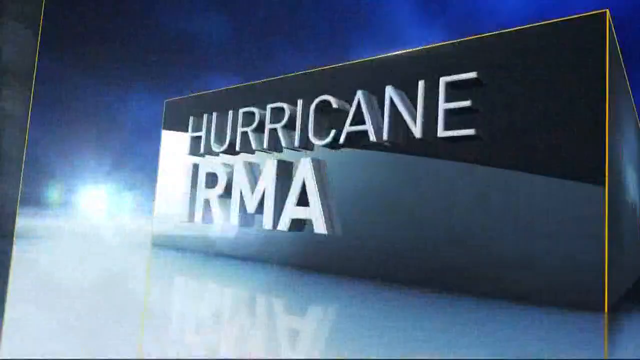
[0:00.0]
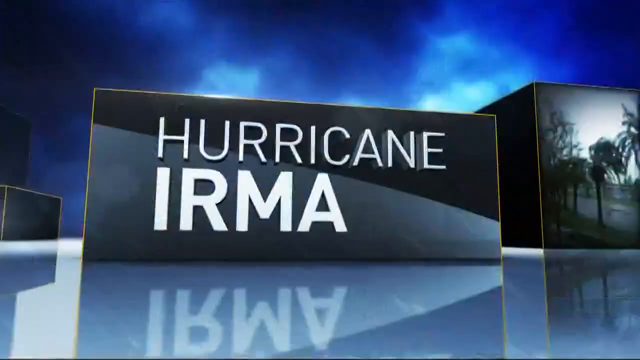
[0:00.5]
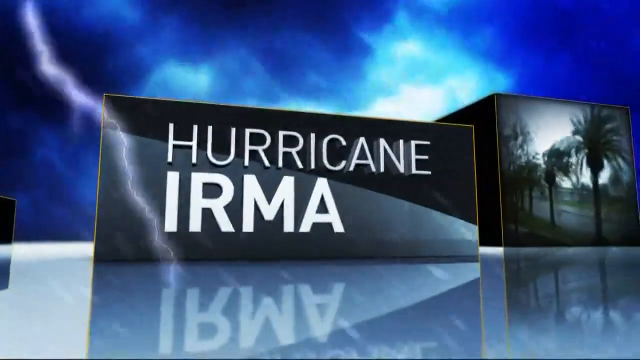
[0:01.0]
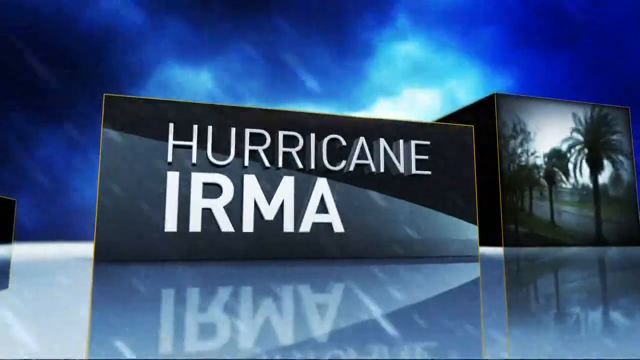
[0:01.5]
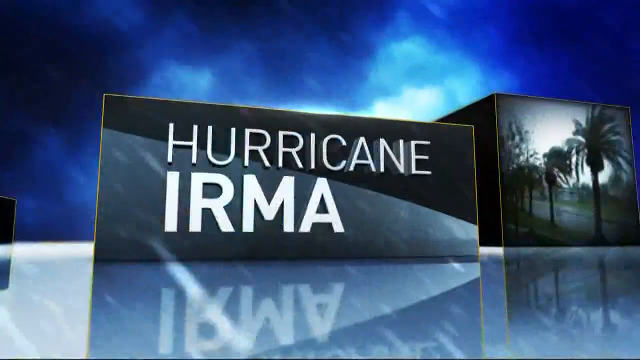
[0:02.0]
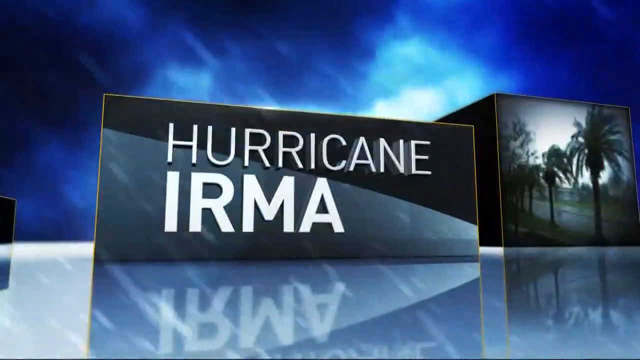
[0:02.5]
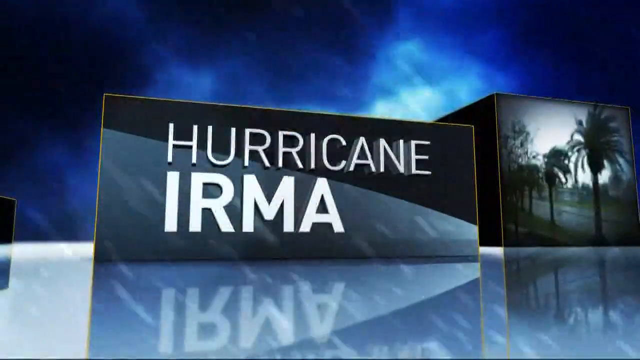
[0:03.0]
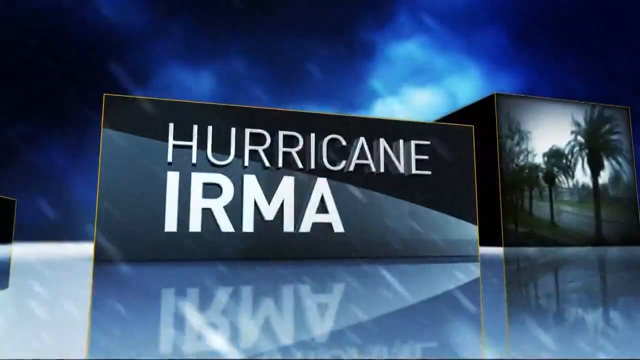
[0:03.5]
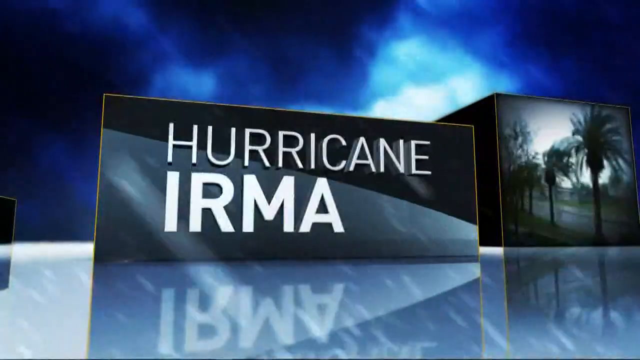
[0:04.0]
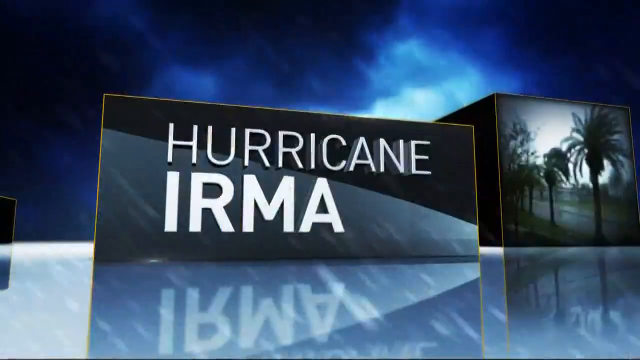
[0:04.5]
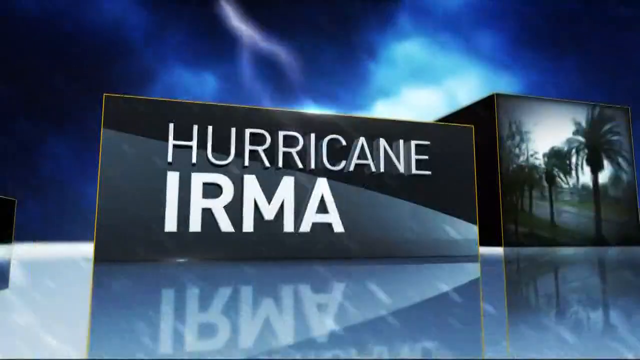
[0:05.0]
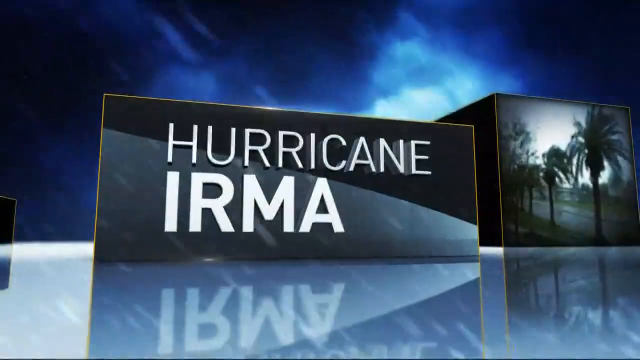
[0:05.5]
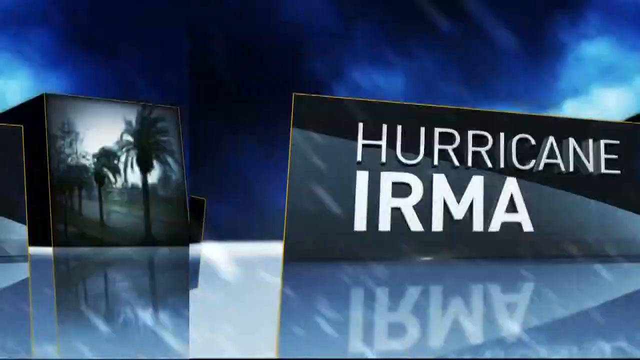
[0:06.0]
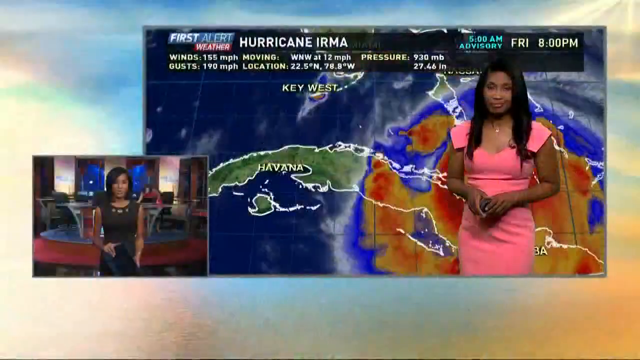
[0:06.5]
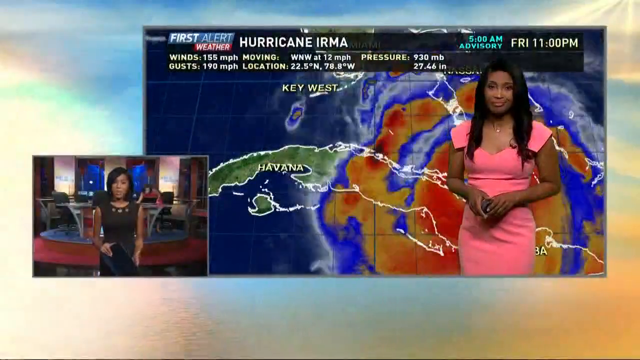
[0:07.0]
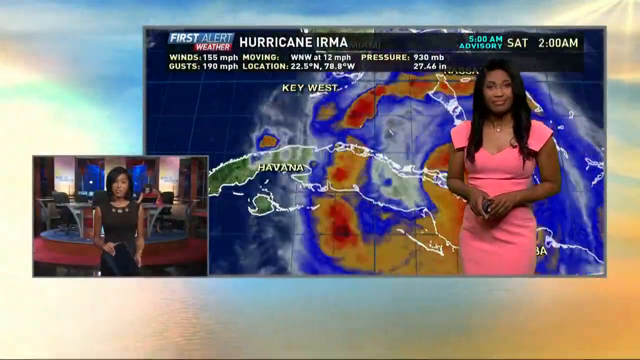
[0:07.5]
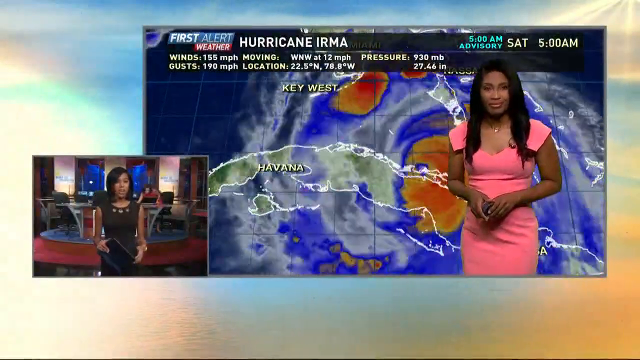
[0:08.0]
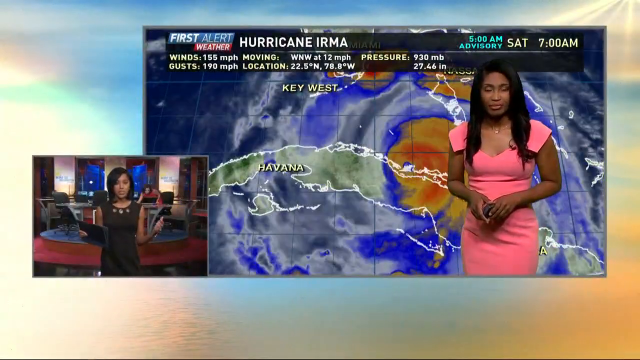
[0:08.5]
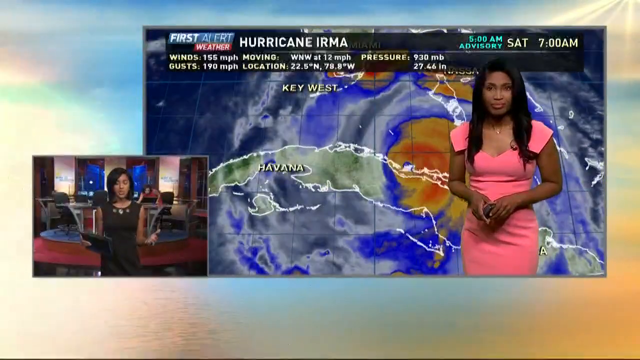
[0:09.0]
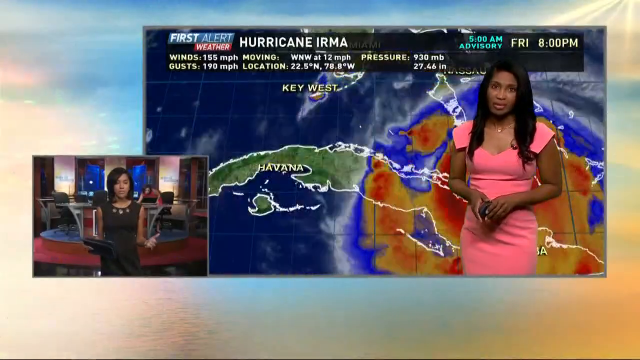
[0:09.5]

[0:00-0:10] The video is about Hurricane Irma. Thunderstorms can be seen in some way, along with trees, and lightning is shown on the screen. A picture shows a very dark area. Two captions then appear: a bigger caption in the centre, with "Hurricane Irma" written on it, has a woman at the front who takes a few breaths while map diagrams are shown. In the caption on the bottom left there is also a woman wearing a black dress, facing the camera, with a somewhat blue background behind her. On the diagram, the wind speed and the pressure are written, and on the right side the day and the time are written. The diagram has a blue background, the maps are in blue, orange and red, the keywords are written in white, and just slightly below, "Havana" is written. The woman who is standing wears a pink dress and a necklace and has long black hair.